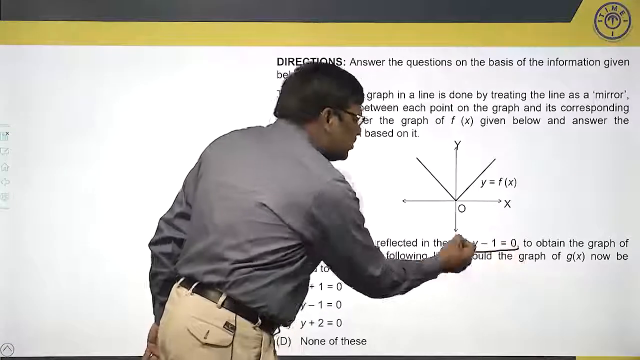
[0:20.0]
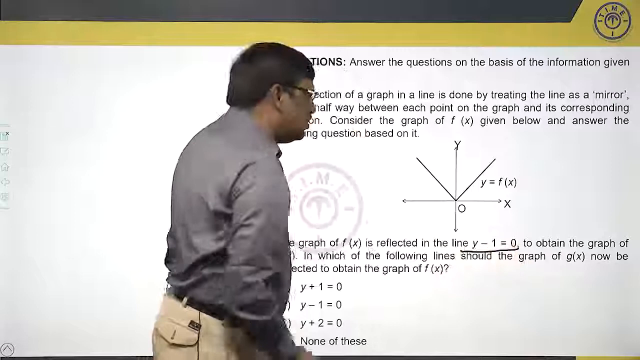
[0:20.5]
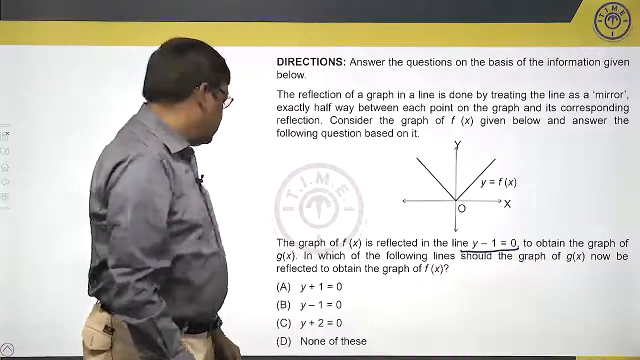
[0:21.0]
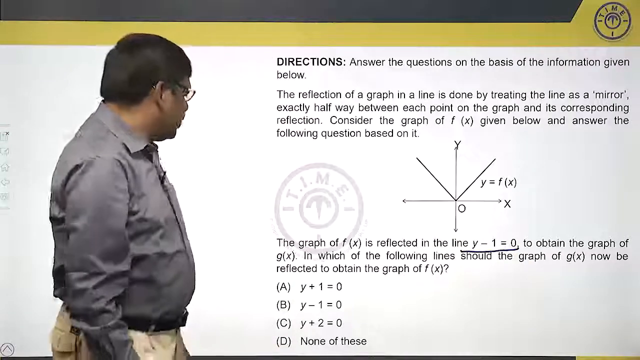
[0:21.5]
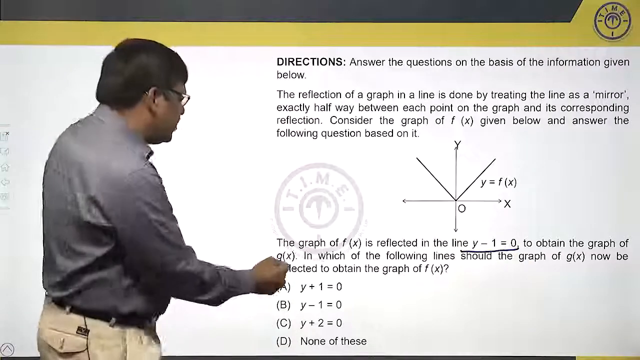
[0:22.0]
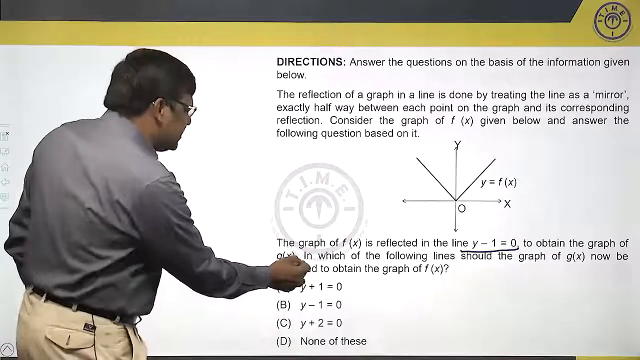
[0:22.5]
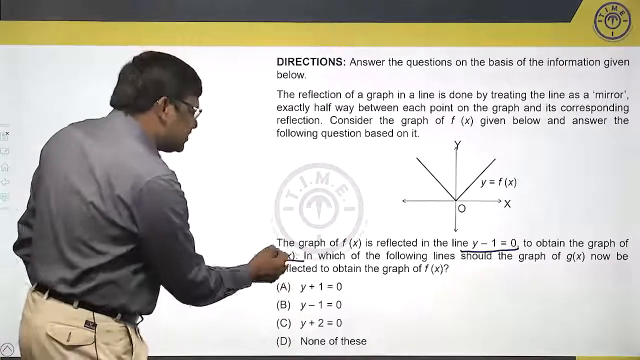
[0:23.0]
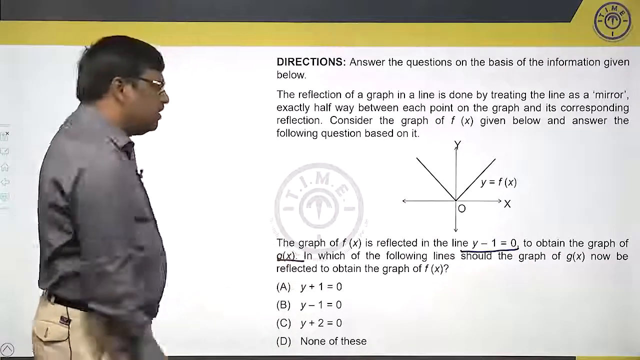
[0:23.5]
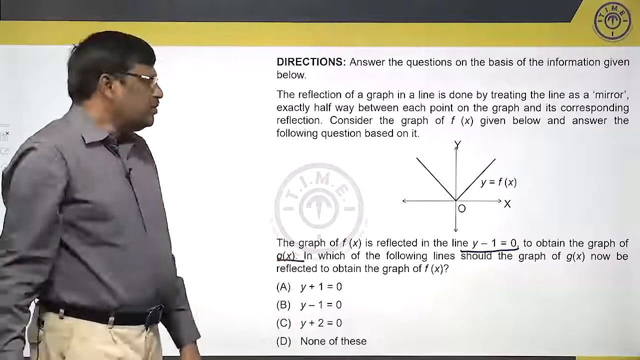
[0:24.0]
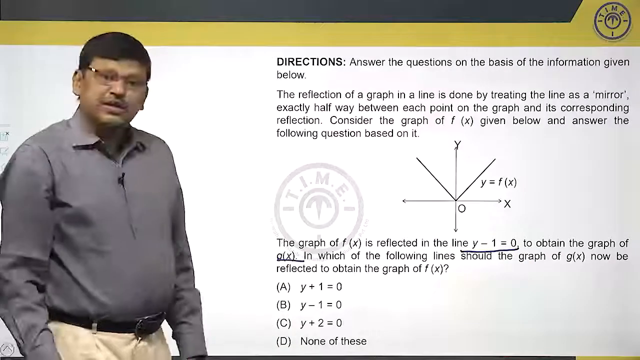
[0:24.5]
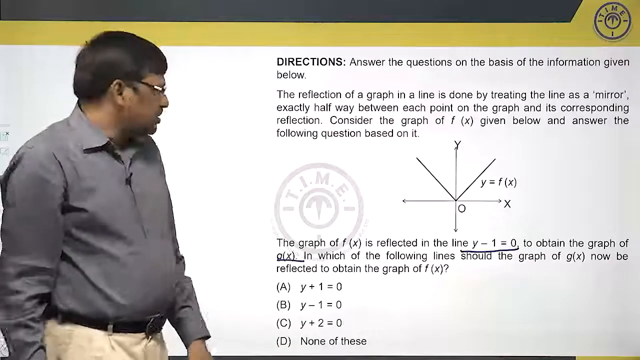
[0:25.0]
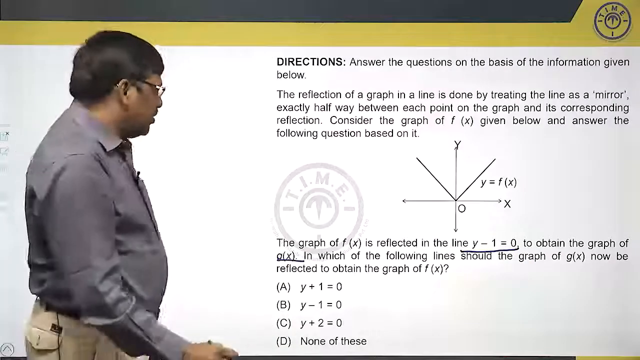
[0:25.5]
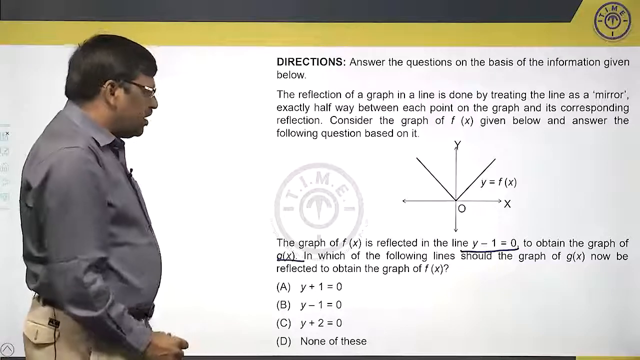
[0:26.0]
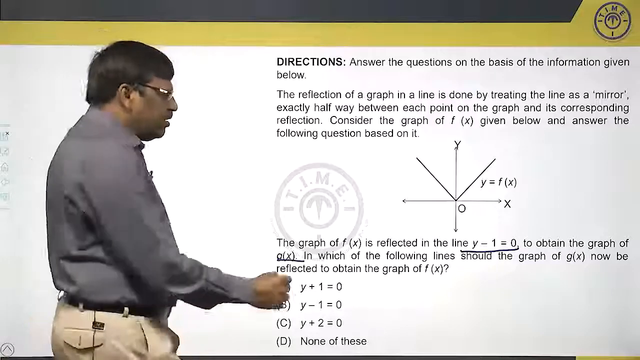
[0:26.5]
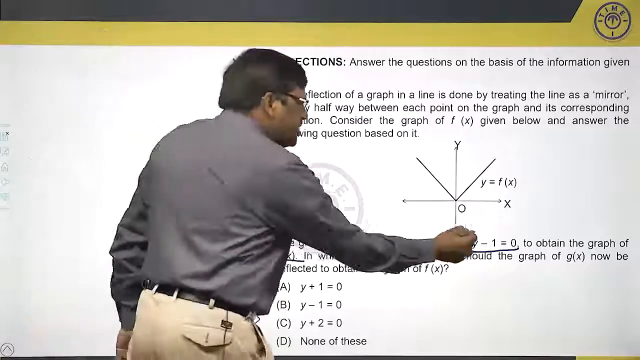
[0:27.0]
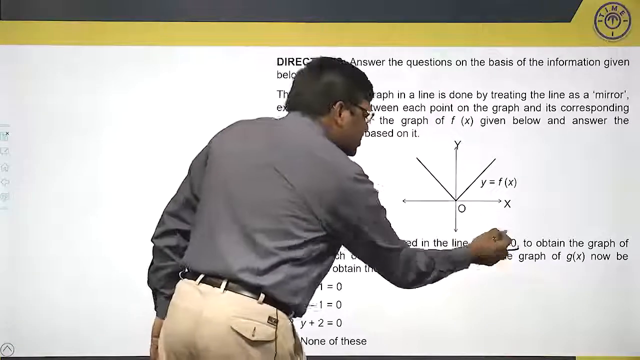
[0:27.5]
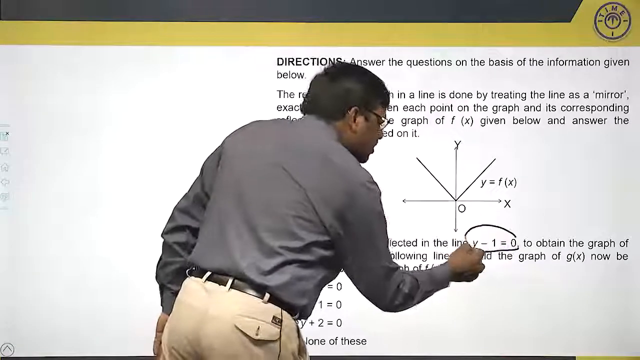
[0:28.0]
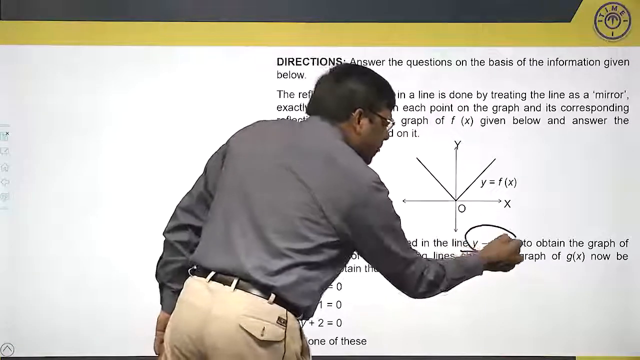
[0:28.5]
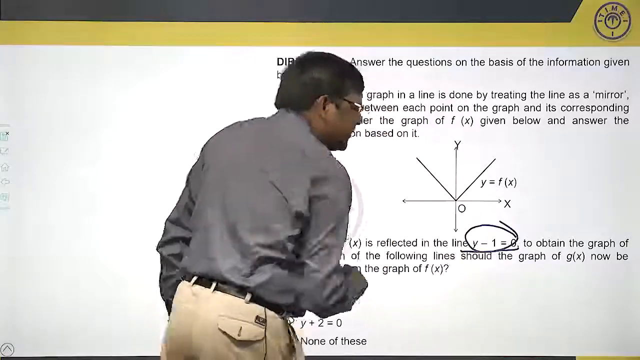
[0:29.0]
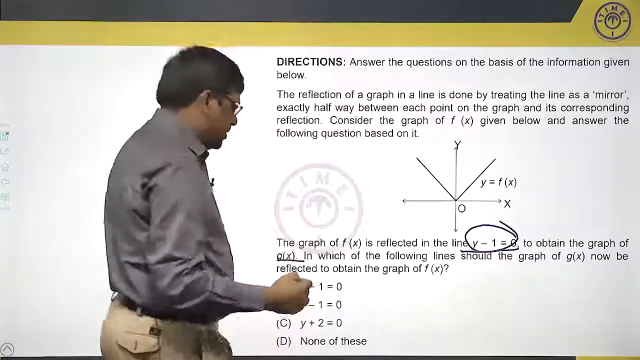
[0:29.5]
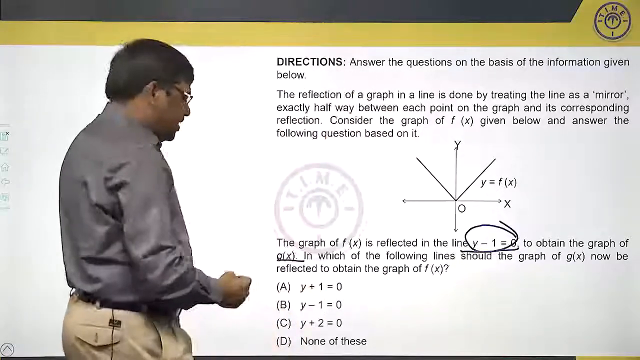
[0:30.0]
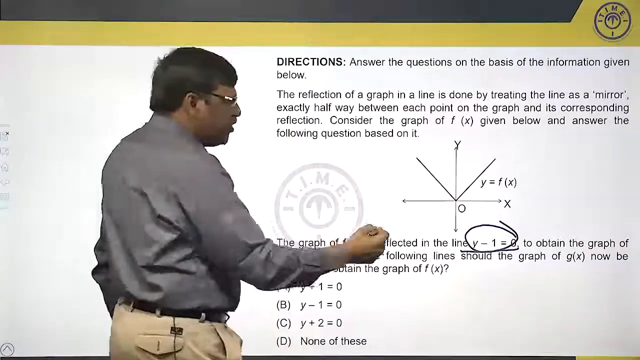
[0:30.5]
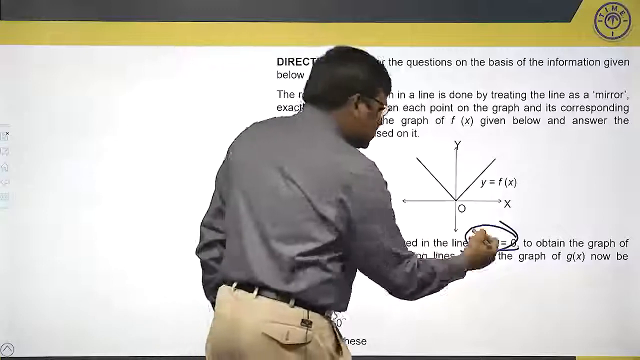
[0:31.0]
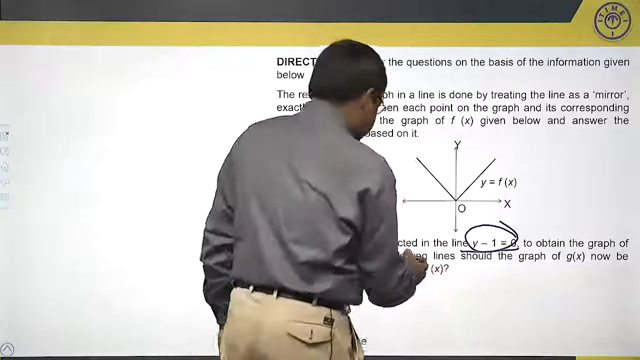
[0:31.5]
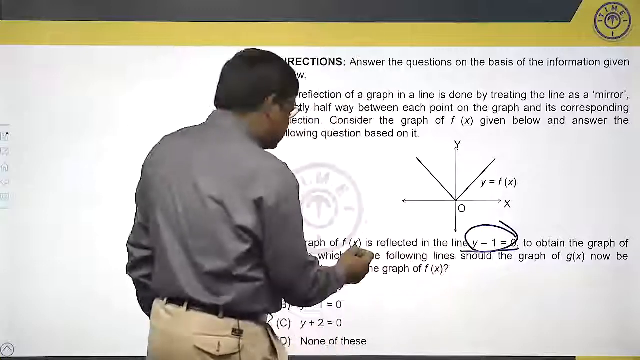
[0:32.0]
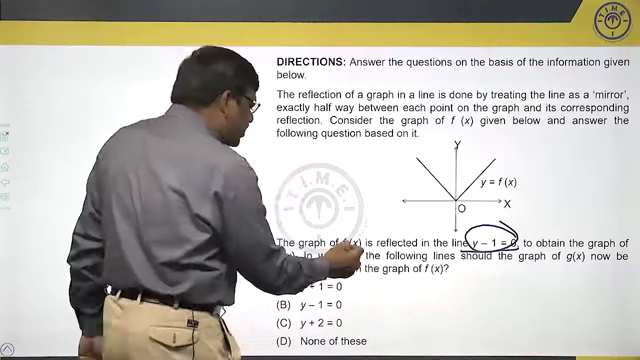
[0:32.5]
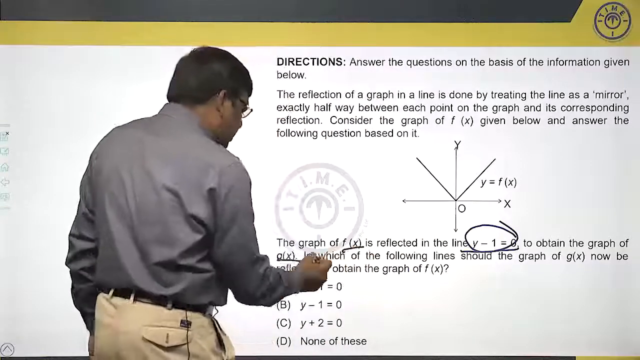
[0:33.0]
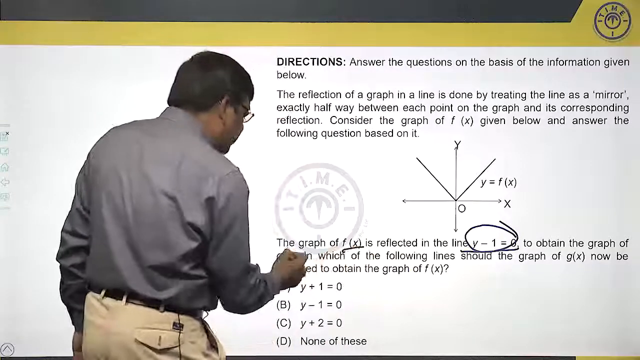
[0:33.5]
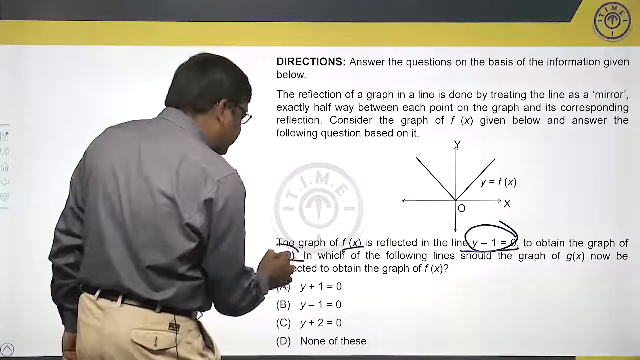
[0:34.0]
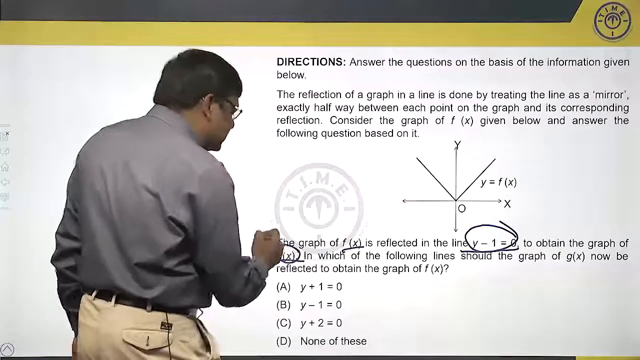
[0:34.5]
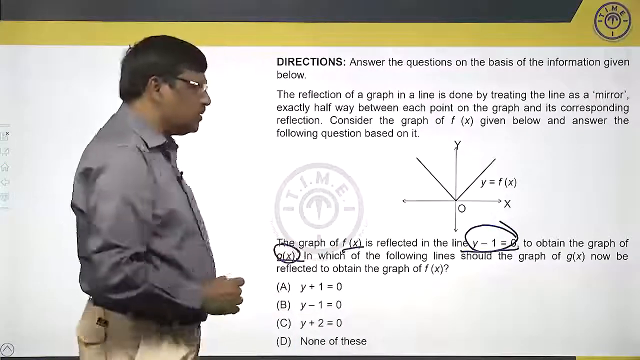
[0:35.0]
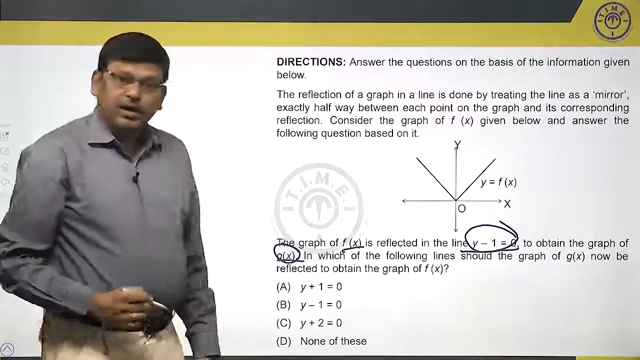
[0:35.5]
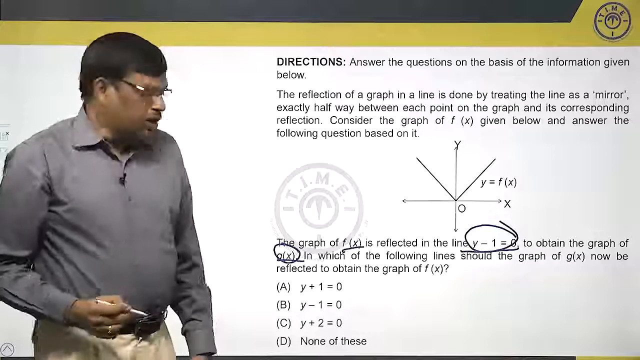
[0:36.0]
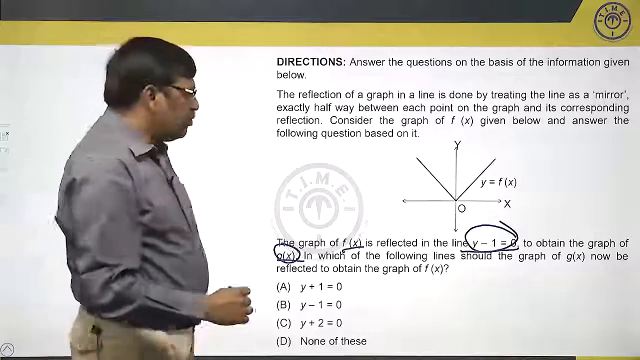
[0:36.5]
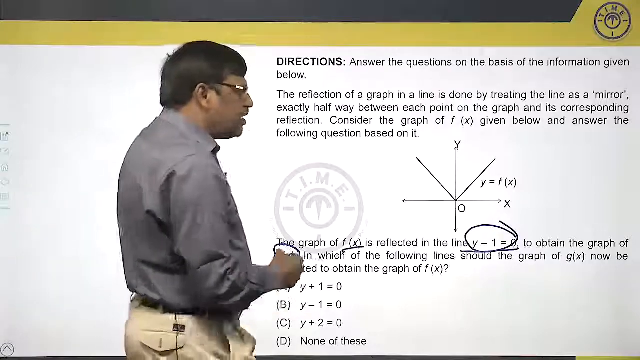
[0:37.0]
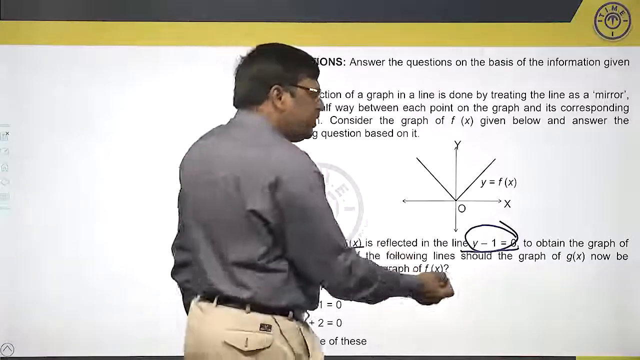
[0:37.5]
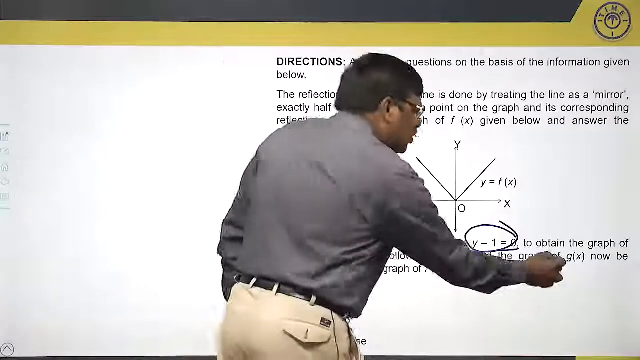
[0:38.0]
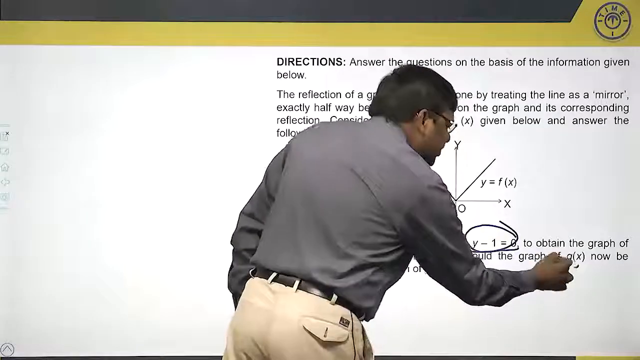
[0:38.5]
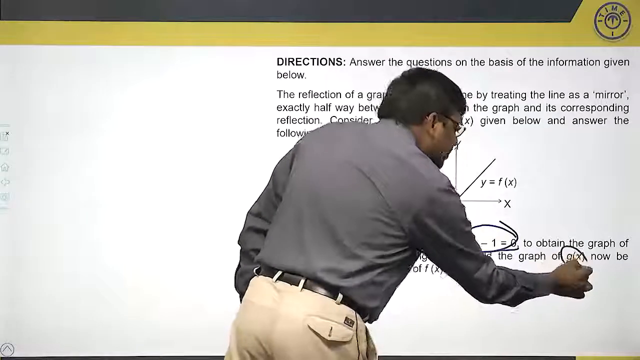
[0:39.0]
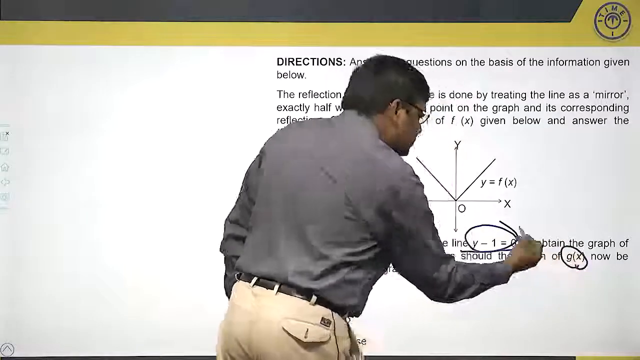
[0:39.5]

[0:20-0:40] The man bends over toward the screen on the right-hand side, facing it, and draws a line under y minus 1 equals 0 and under gx. He circles y minus 1 equals 0 with the marker in his right hand, then circles and underlines gx and fx. He makes a twirling motion with his right hand before circling gx in the second line of the question stem on the right-hand side of the screen. He appears to be going over the question stem, reading it to the viewer and circling the key information needed to understand what the question asks. Through the green screen, he circles on the board behind him while the viewer sees the circles as black marker ink. A logo is in the top right corner of the screen, and a gold and black banner runs across the top of the screen.